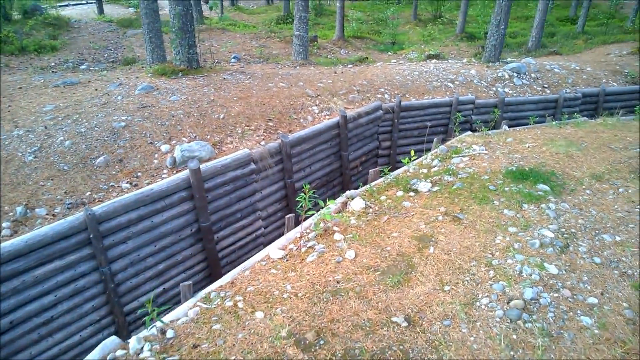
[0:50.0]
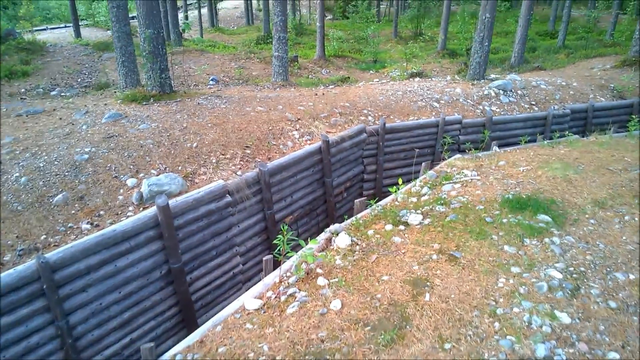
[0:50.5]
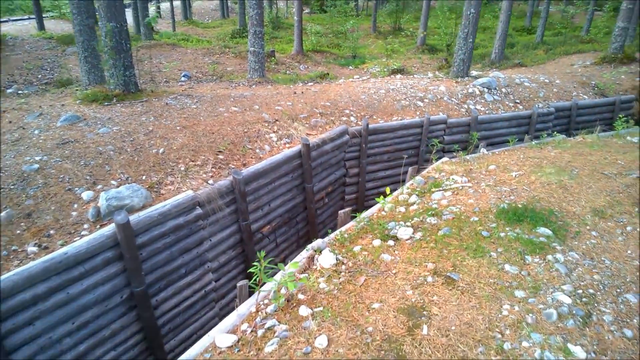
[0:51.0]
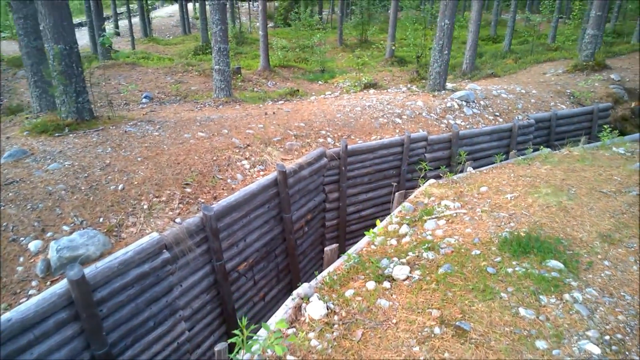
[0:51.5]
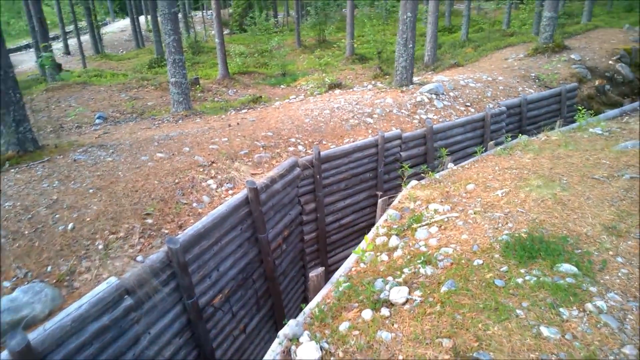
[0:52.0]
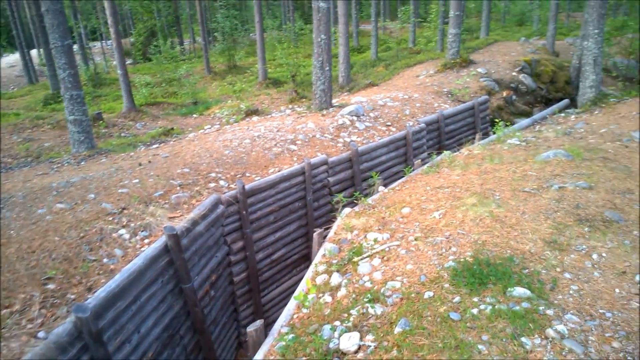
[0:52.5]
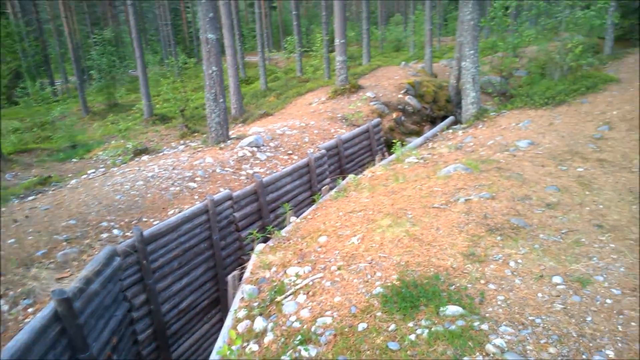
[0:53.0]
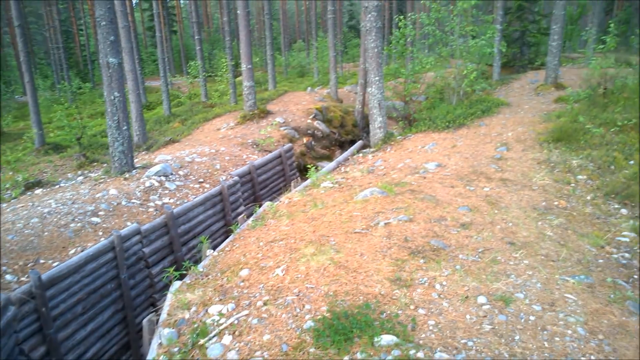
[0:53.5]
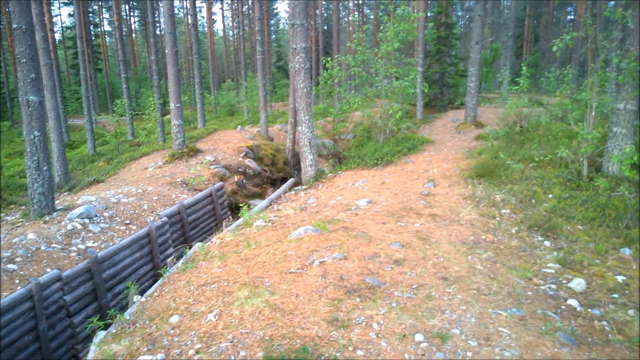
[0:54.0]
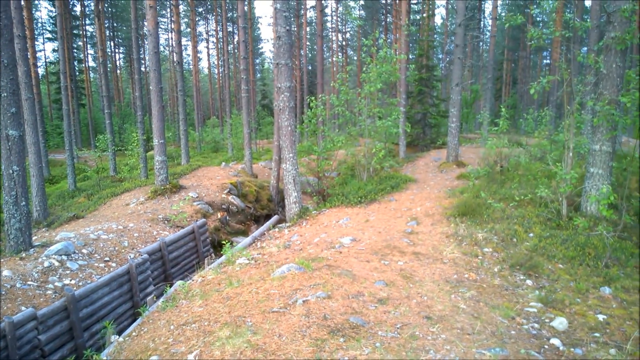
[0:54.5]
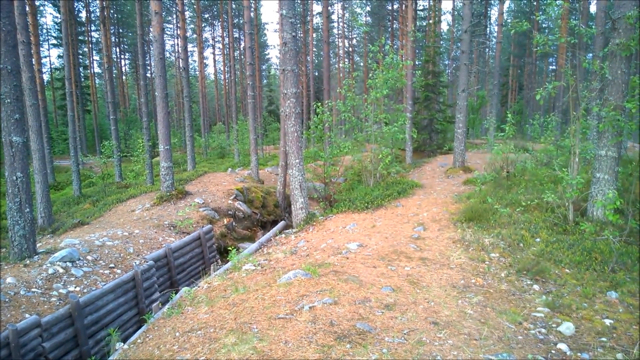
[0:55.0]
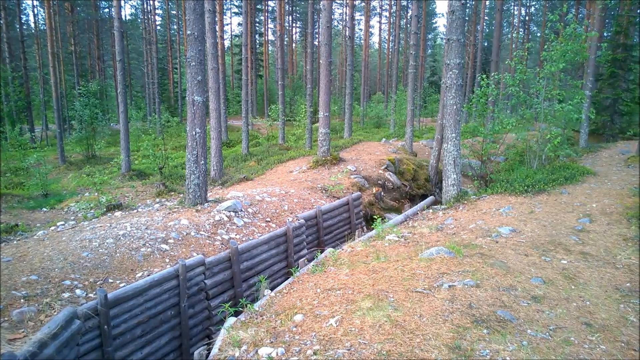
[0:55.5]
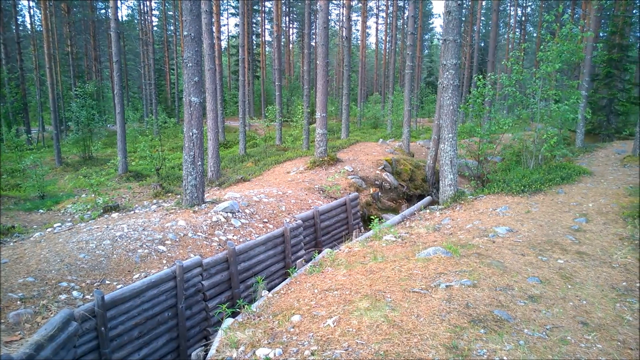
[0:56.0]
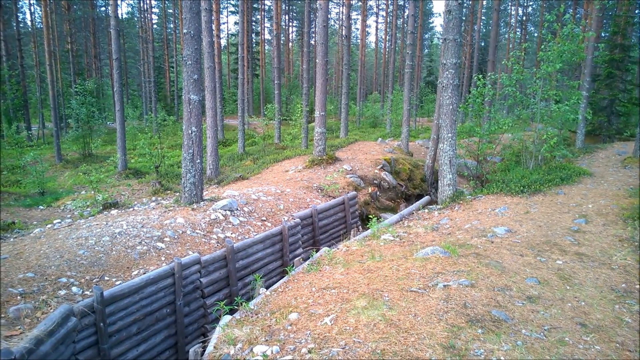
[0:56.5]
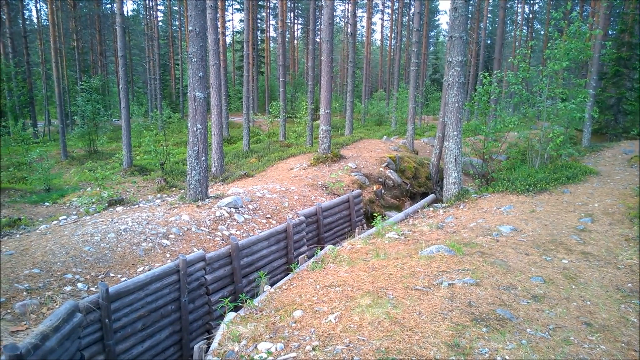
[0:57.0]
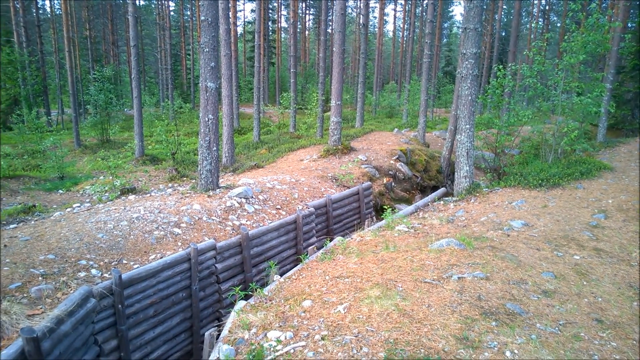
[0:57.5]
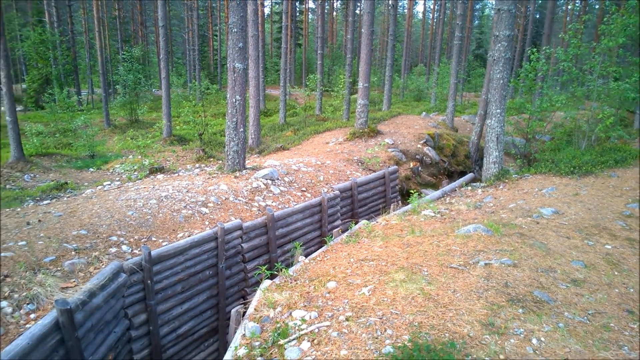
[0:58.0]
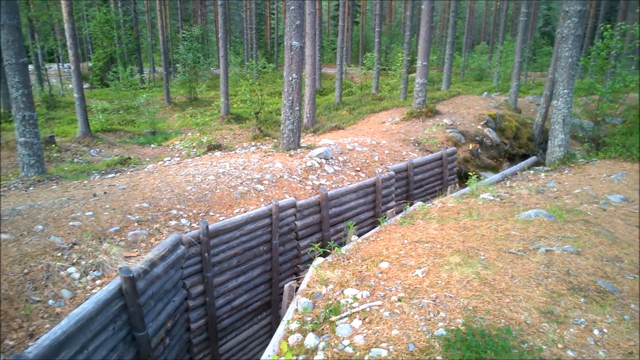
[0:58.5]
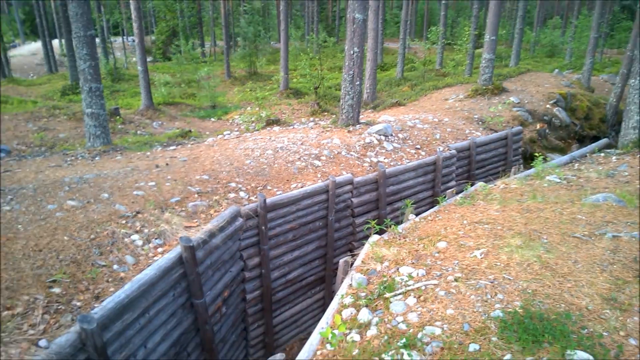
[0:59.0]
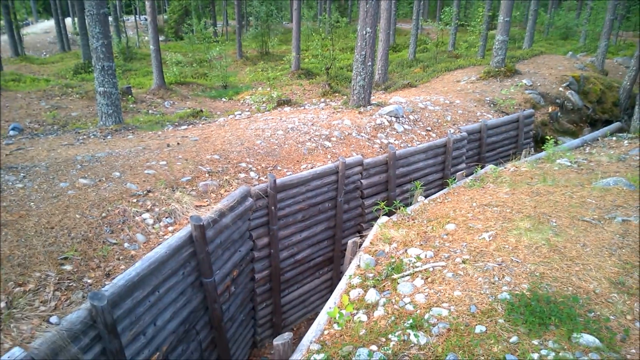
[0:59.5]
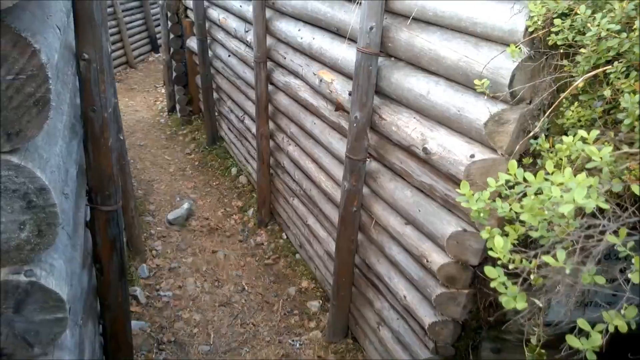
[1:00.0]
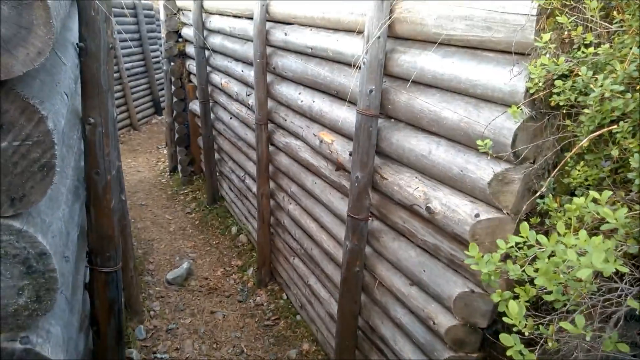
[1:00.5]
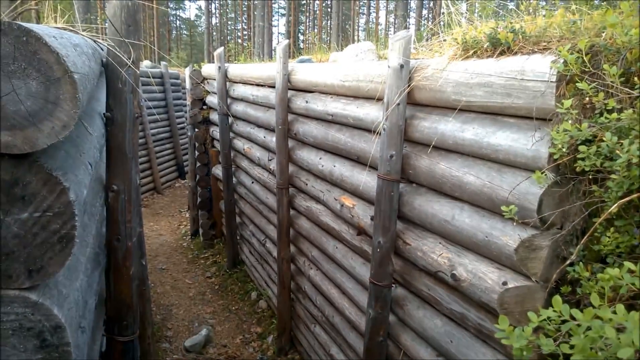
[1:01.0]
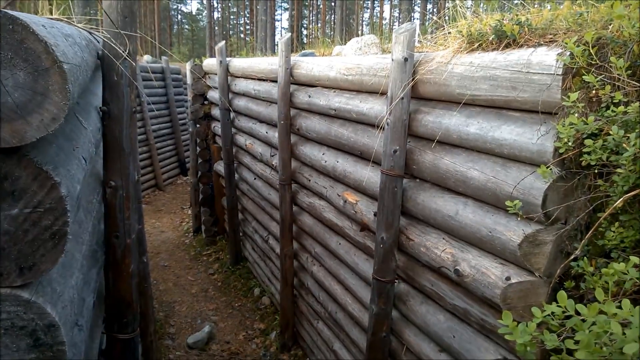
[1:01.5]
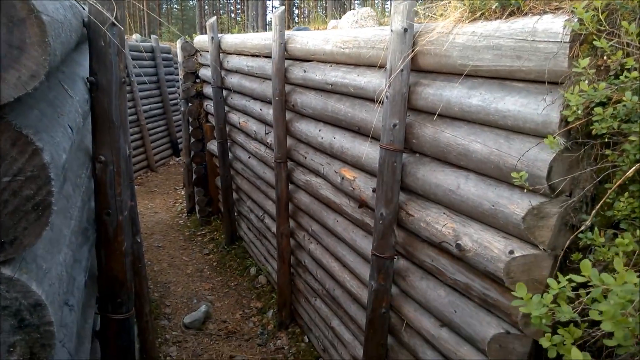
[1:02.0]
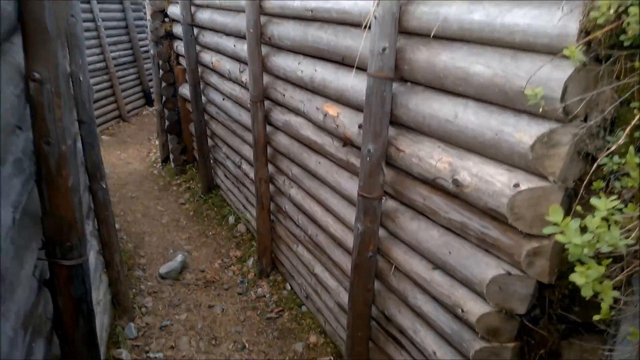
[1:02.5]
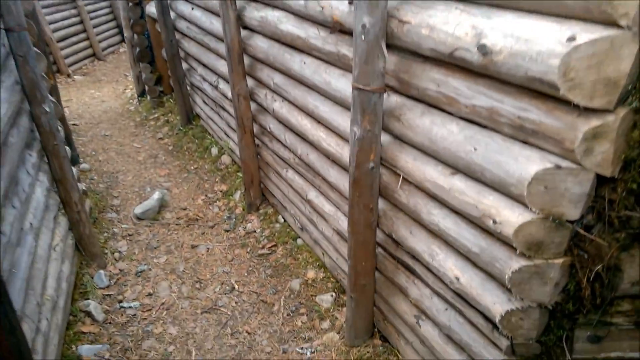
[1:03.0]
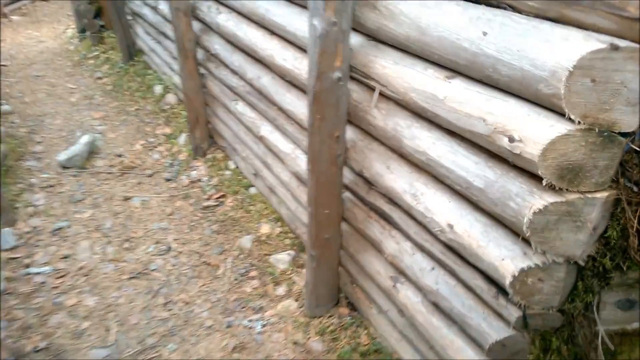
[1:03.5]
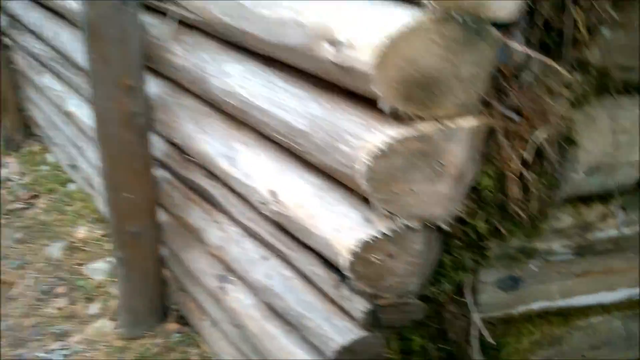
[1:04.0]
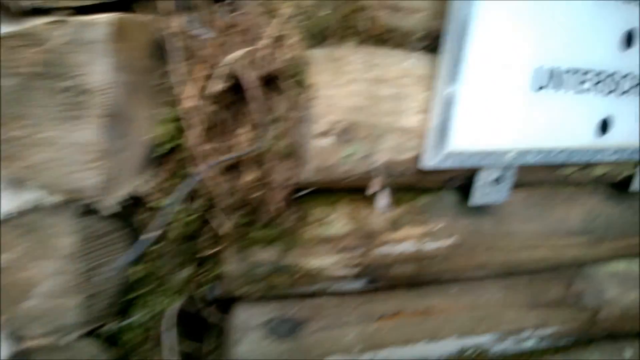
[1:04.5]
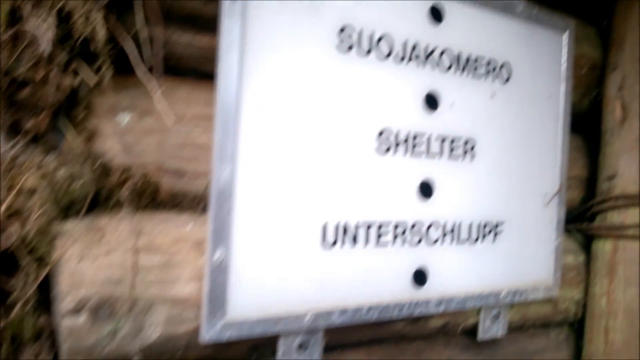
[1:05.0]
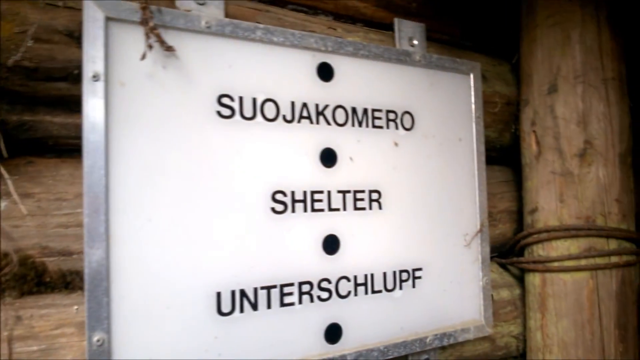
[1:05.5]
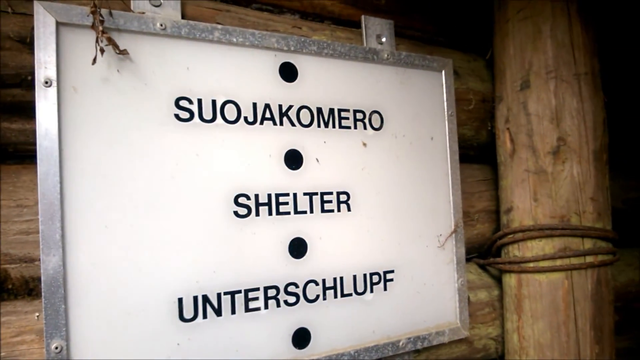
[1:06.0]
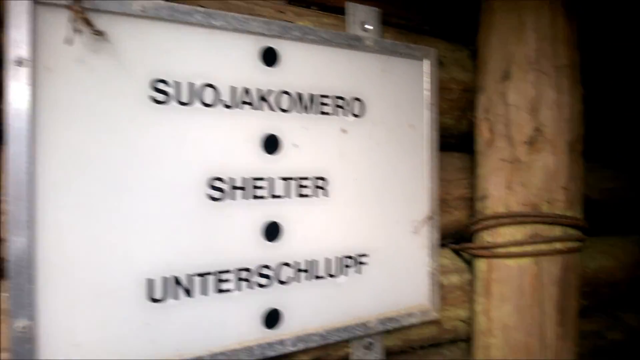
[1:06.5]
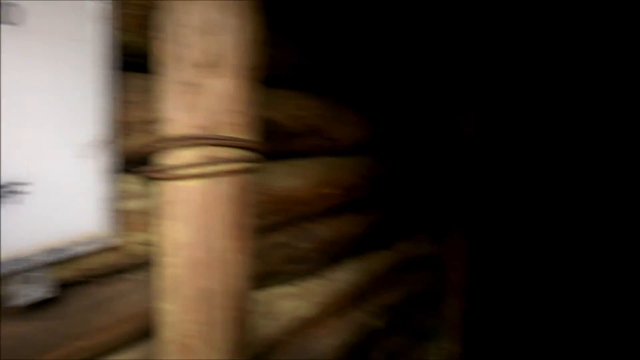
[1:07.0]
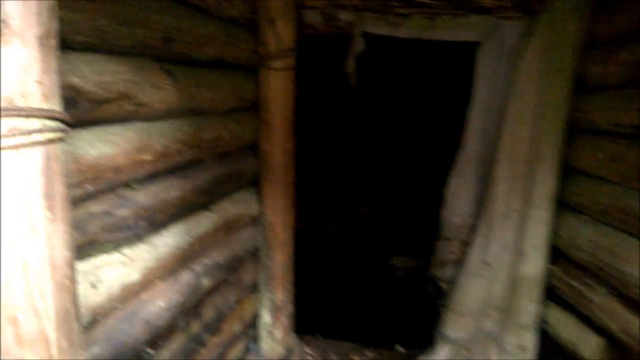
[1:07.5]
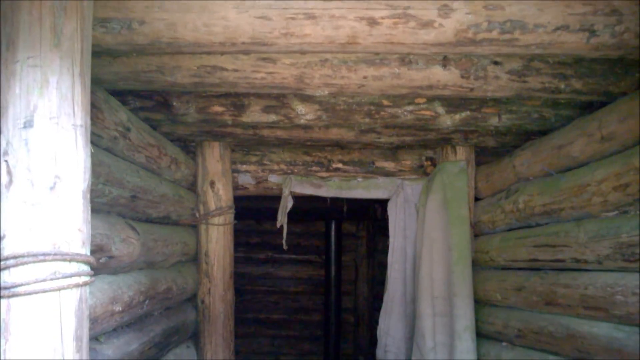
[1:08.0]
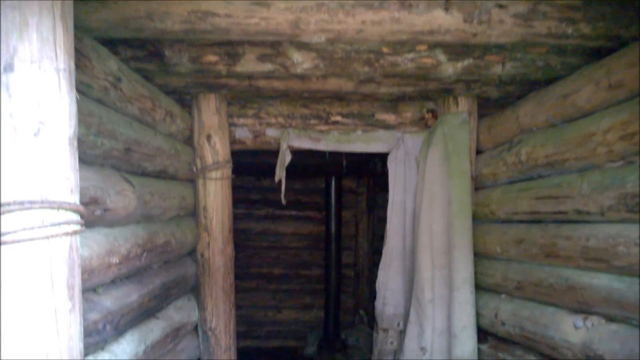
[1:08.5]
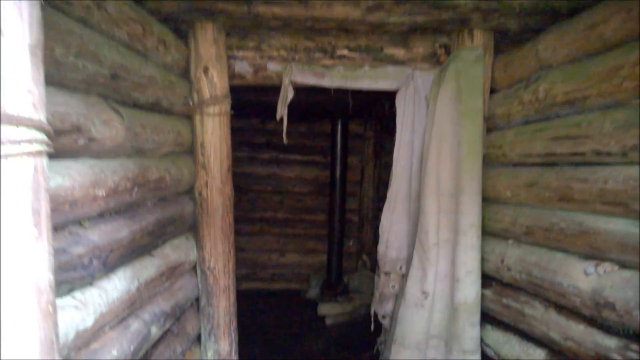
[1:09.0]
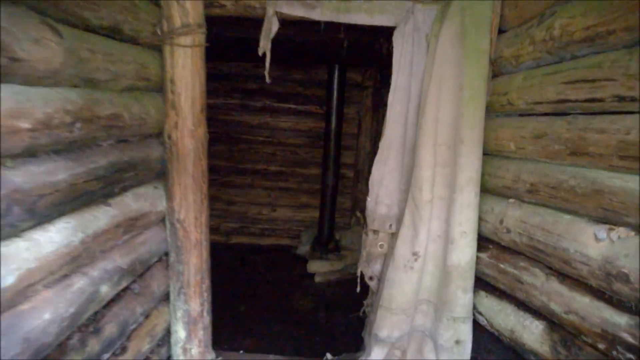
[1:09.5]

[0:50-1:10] The camera follows the trench from outside, looking down into it from ground level at a higher vantage point. The trench appears to end at a kind of ditch, making it quite short and not big. The camera then cuts to a new shot inside the trench and zooms into a sign with three words in three different languages. One is English and reads "shelter"; the other two words presumably also mean shelter. The sign is nailed onto the wood structure of the trench and appears clean and in decent condition, not rusted, dirty or dilapidated.